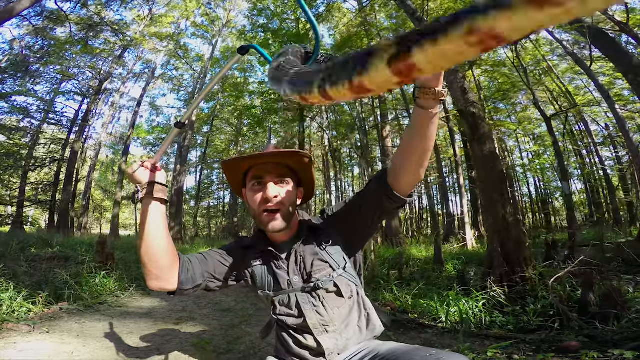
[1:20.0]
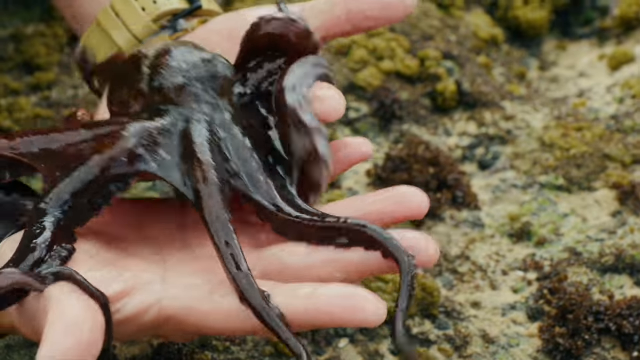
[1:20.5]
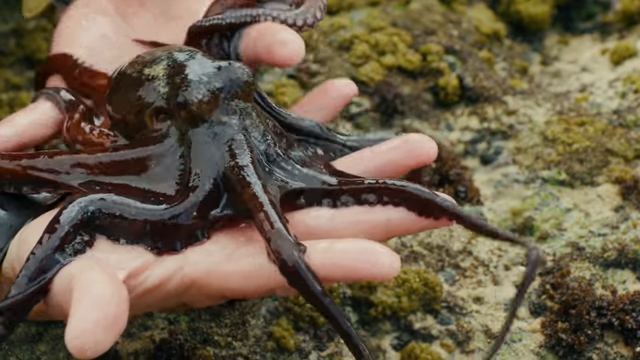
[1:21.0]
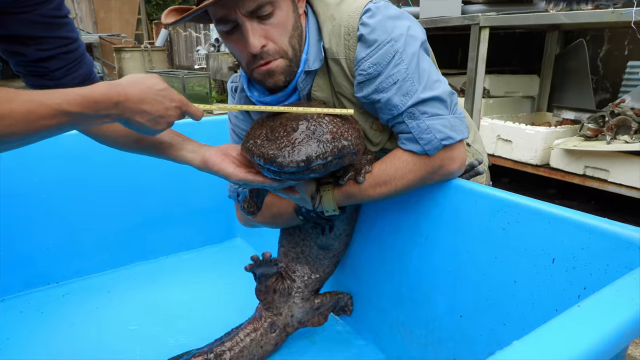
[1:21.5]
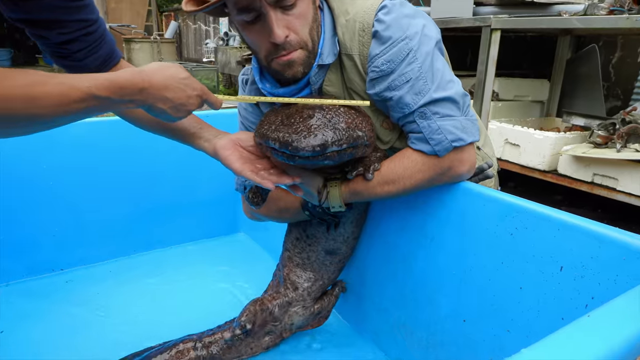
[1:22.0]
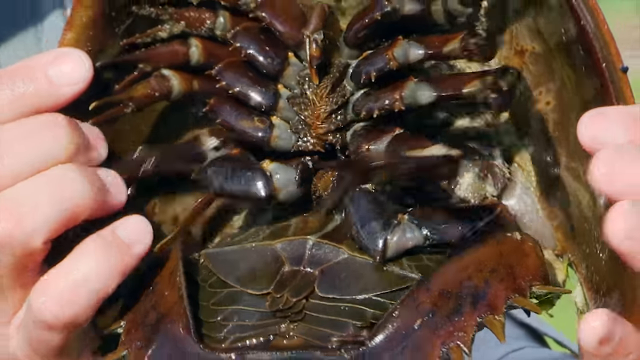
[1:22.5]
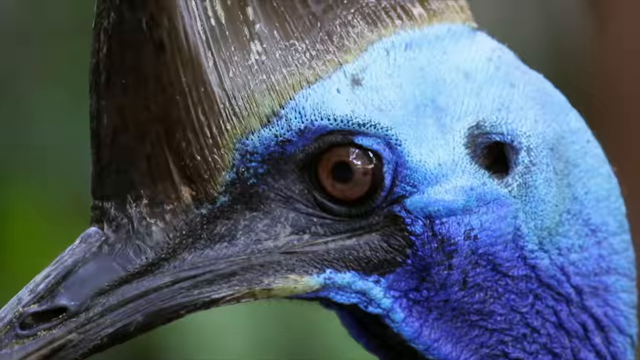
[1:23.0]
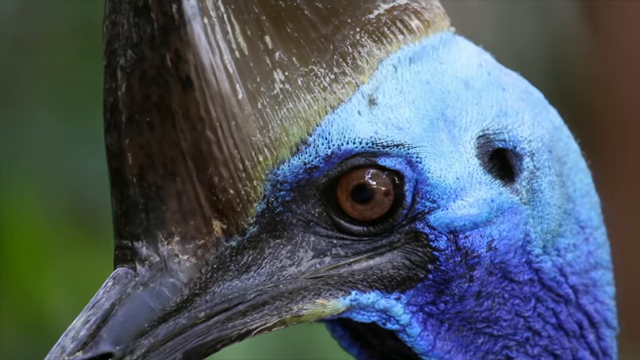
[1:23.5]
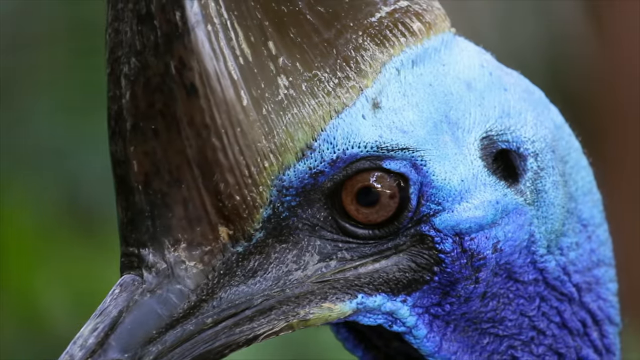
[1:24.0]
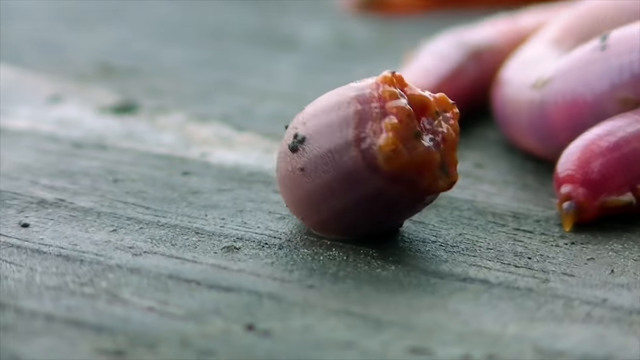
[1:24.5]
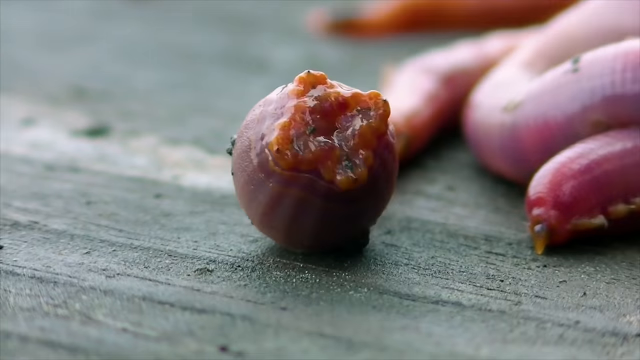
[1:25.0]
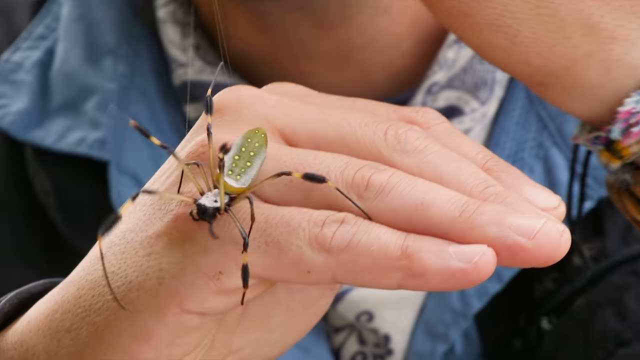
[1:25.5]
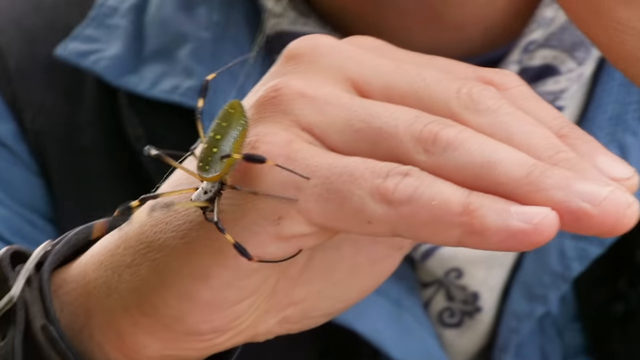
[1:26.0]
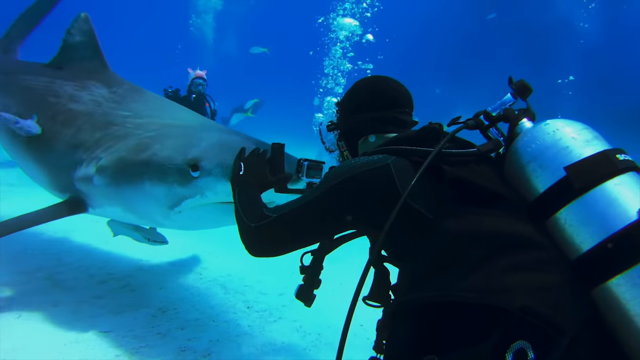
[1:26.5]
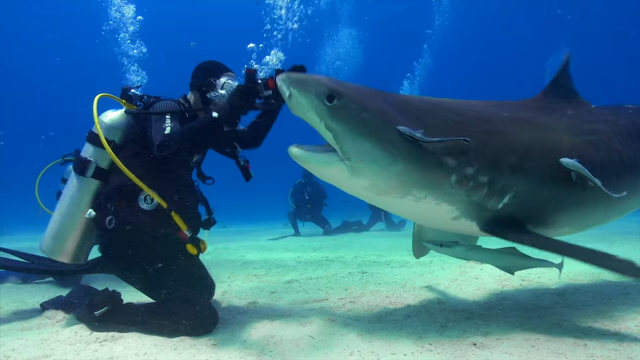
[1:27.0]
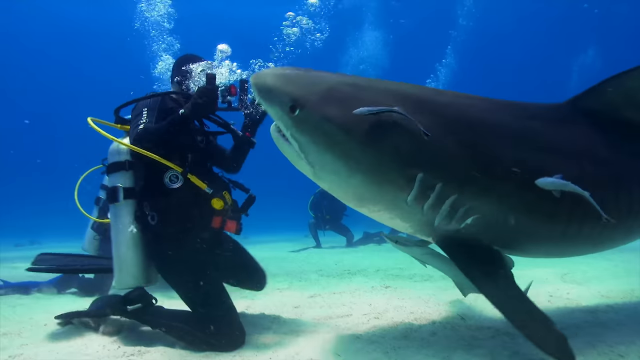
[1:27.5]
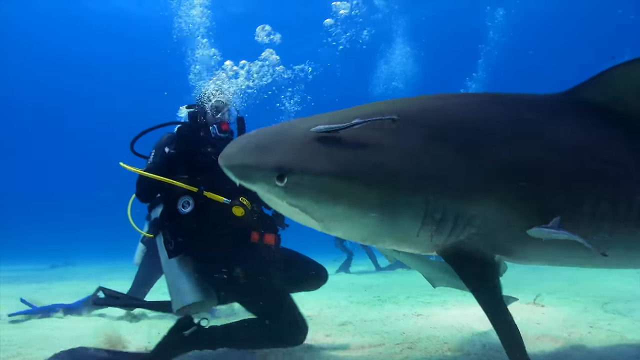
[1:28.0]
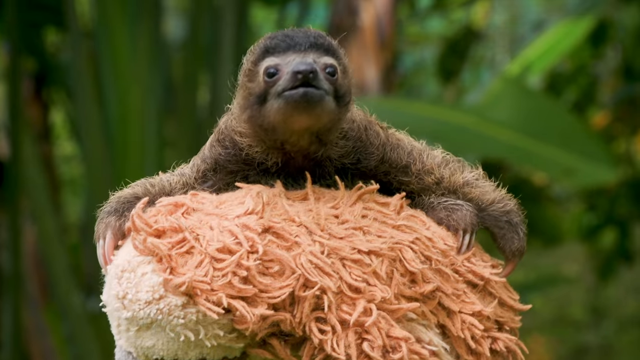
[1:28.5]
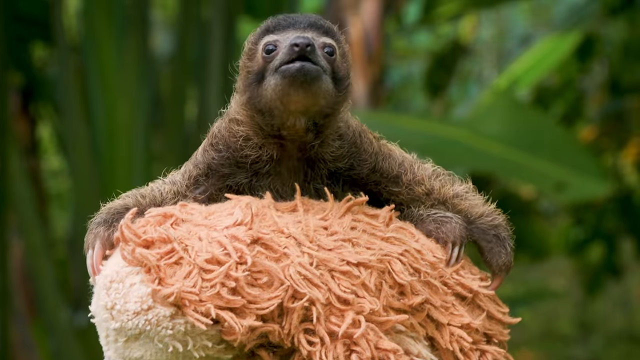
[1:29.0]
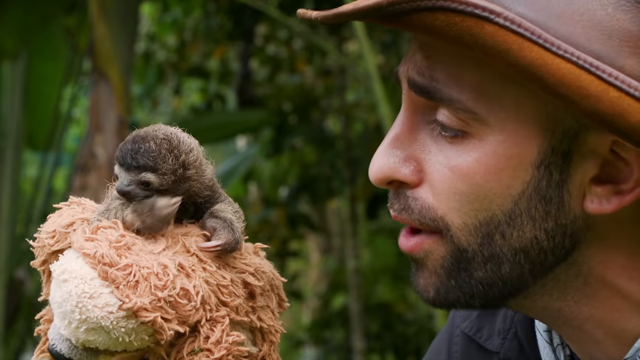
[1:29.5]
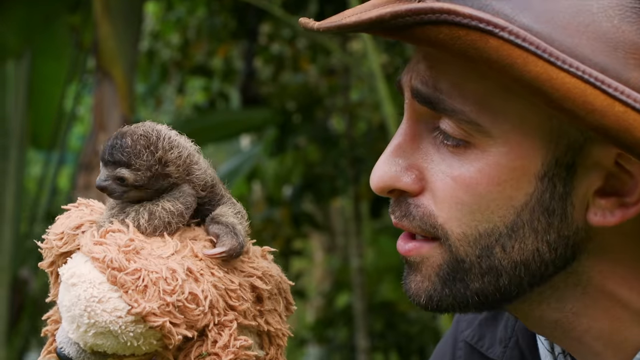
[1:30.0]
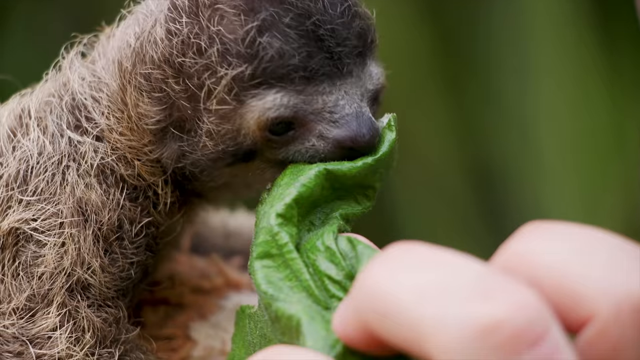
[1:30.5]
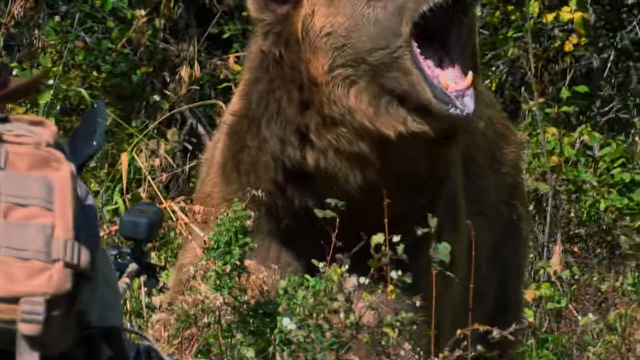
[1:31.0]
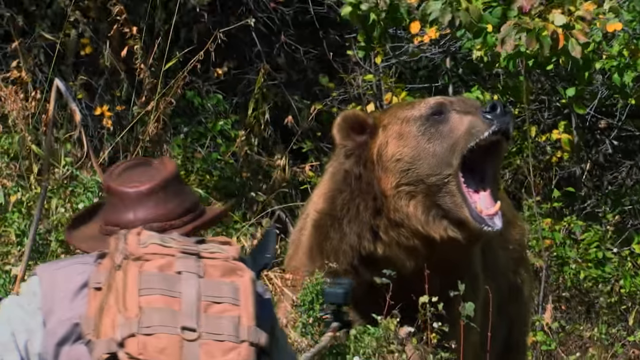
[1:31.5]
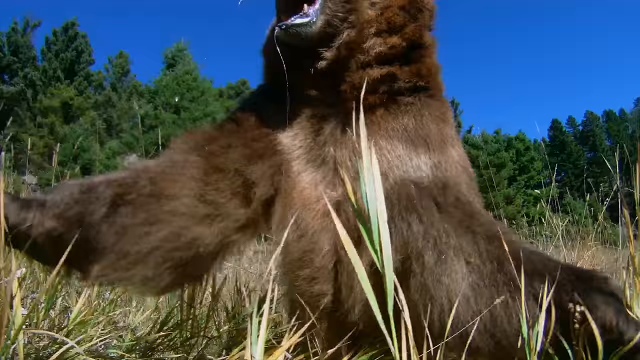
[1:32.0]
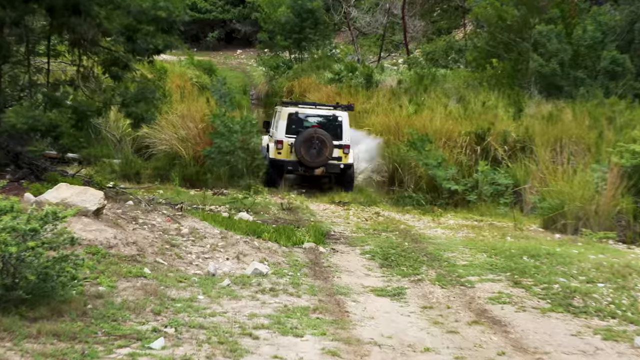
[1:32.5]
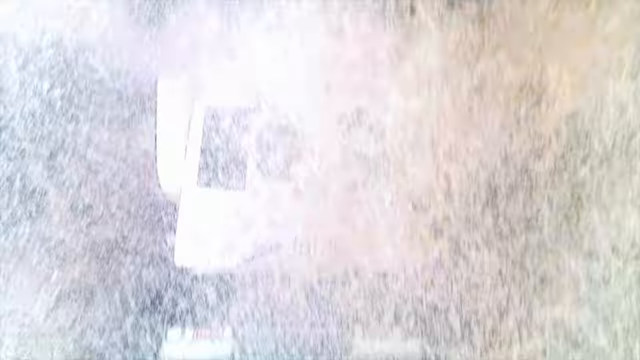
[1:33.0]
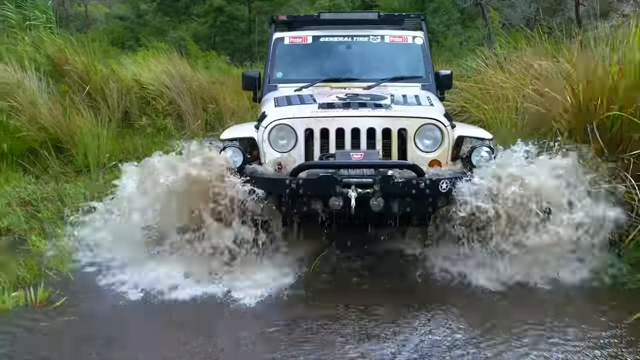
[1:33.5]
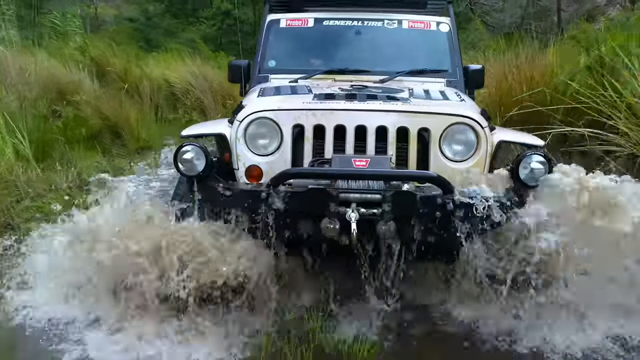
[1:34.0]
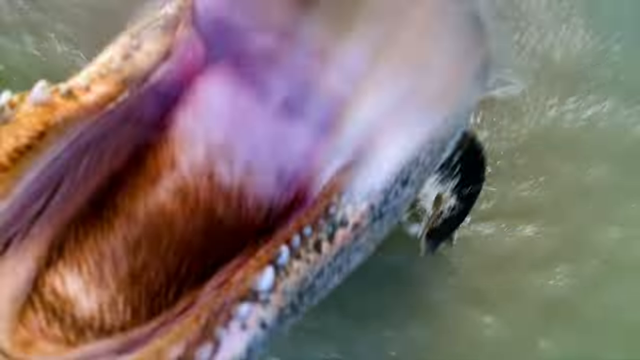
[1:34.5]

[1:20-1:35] People hold some sort of octopus, followed by very quick shots of other animals: alligators, bears, some sort of crab, a bird, a spider and a sloth. In most of these scenes the same man, who is like a host for some sort of documentary, appears, holding or interacting with some of the animals. A fast shot shows a jeep driving down some sort of rough terrain, and scuba divers briefly interact with a shark.